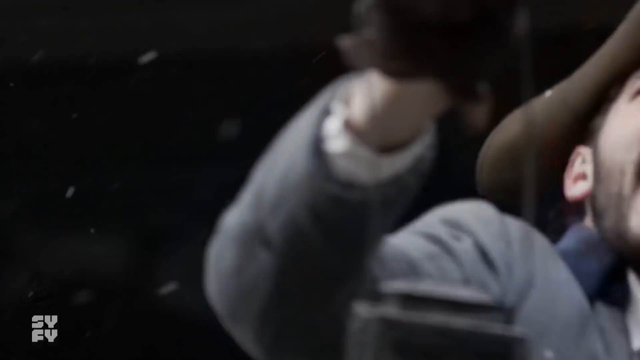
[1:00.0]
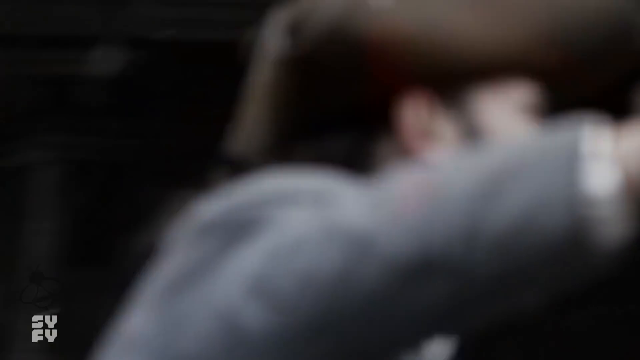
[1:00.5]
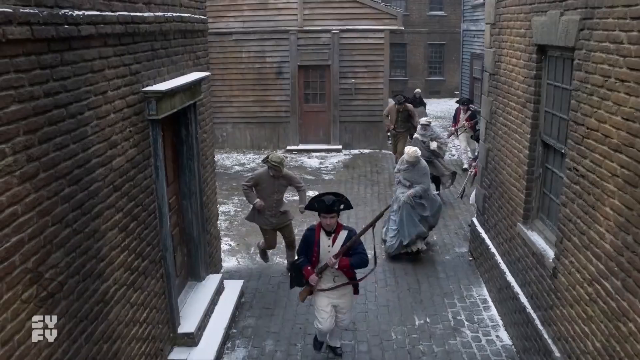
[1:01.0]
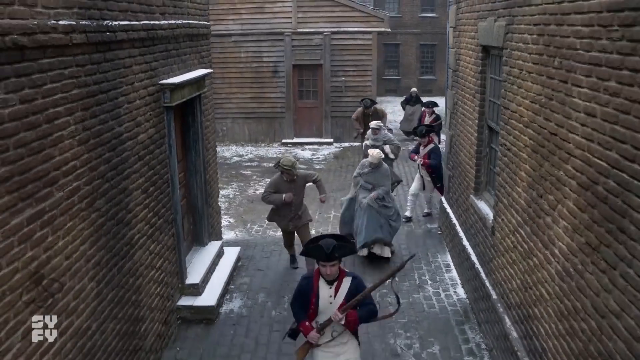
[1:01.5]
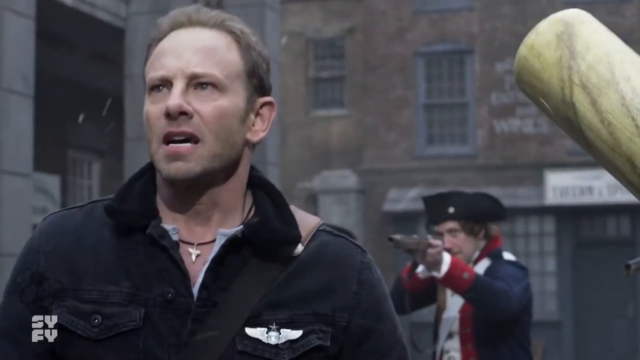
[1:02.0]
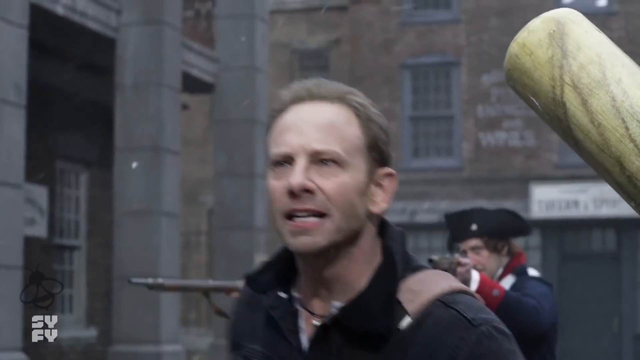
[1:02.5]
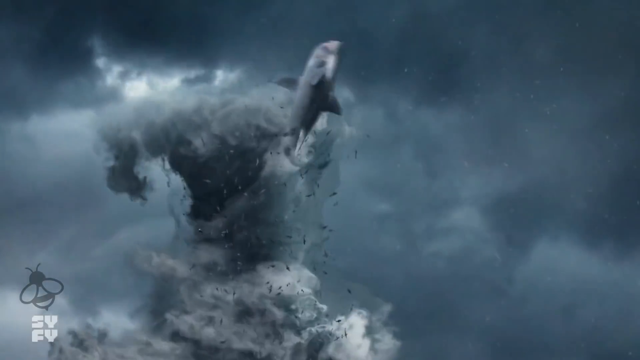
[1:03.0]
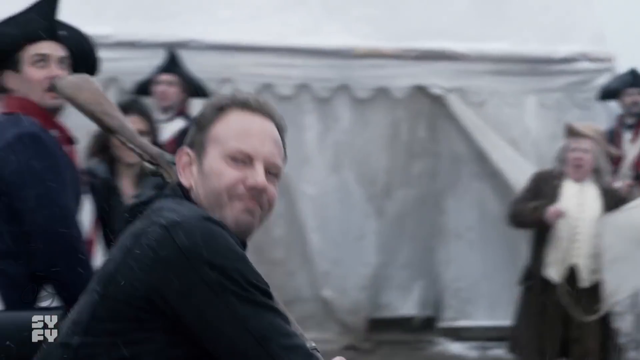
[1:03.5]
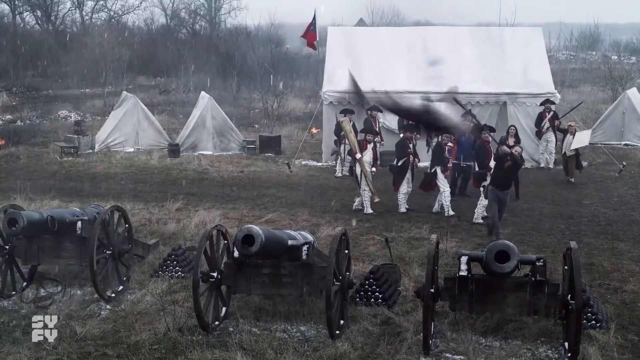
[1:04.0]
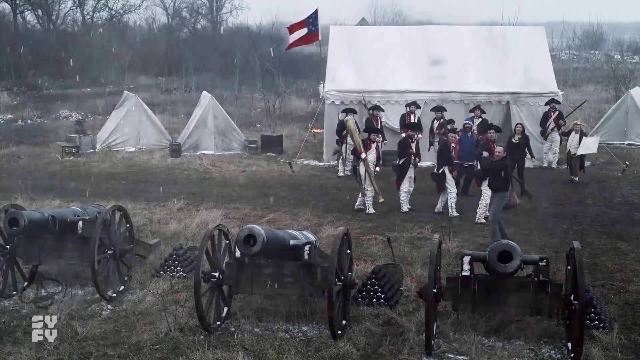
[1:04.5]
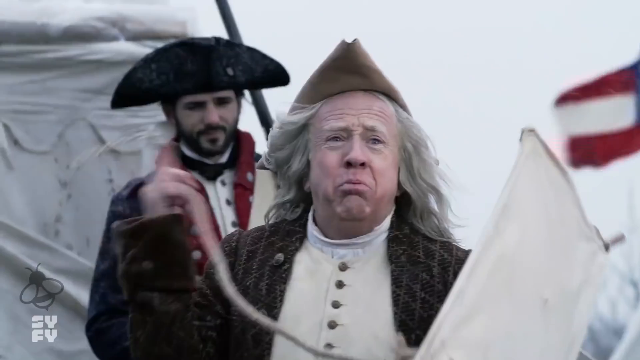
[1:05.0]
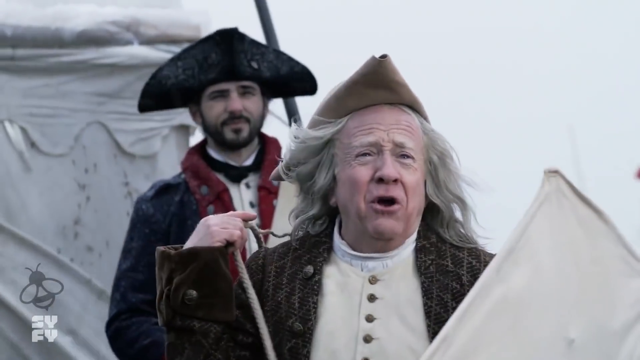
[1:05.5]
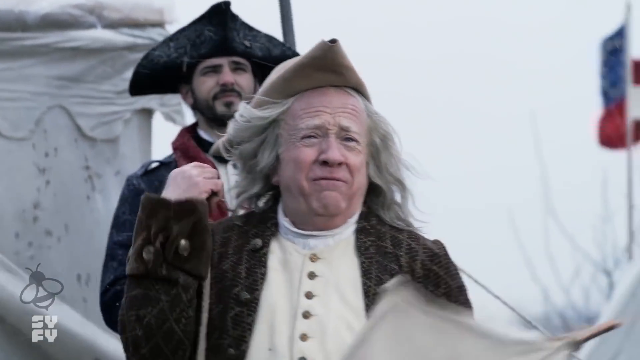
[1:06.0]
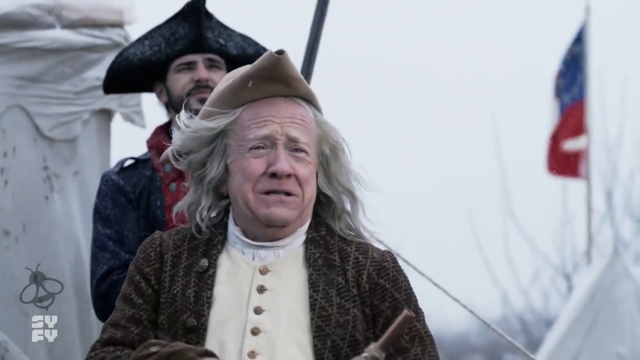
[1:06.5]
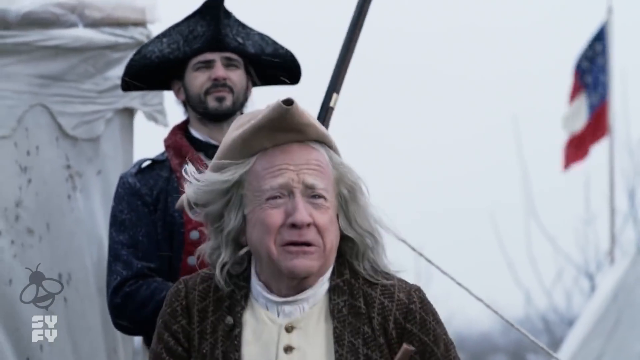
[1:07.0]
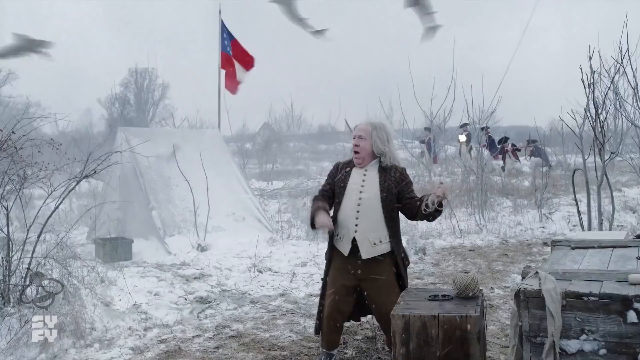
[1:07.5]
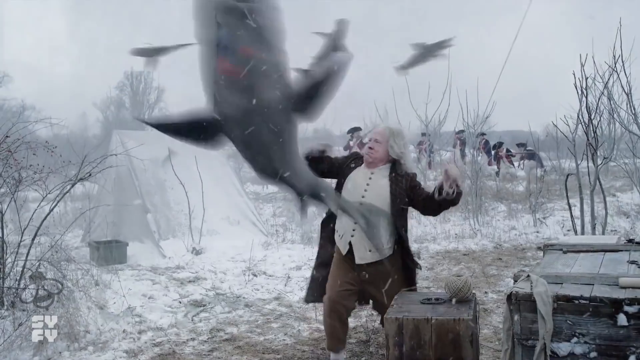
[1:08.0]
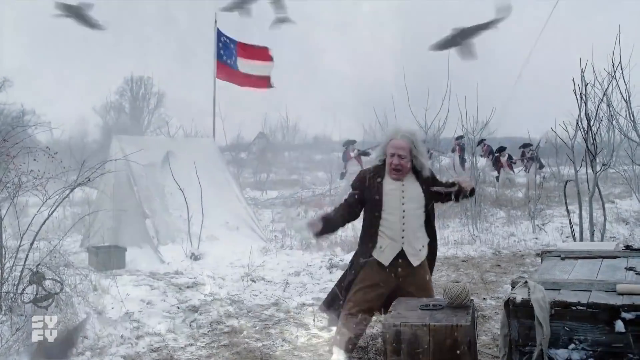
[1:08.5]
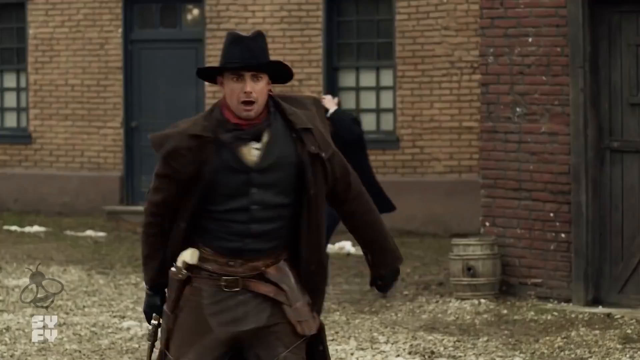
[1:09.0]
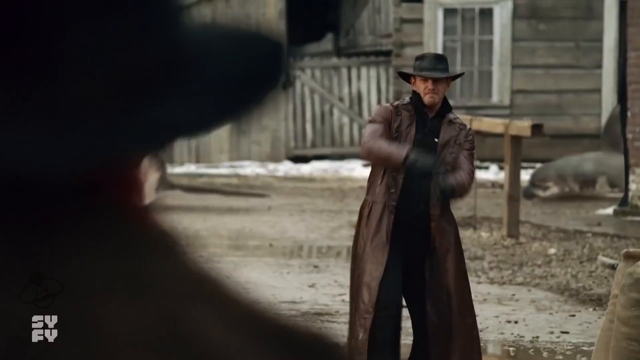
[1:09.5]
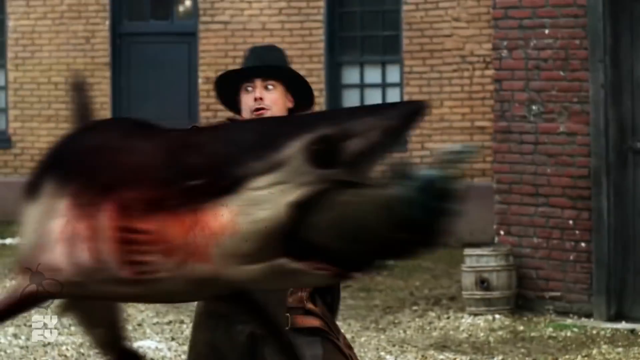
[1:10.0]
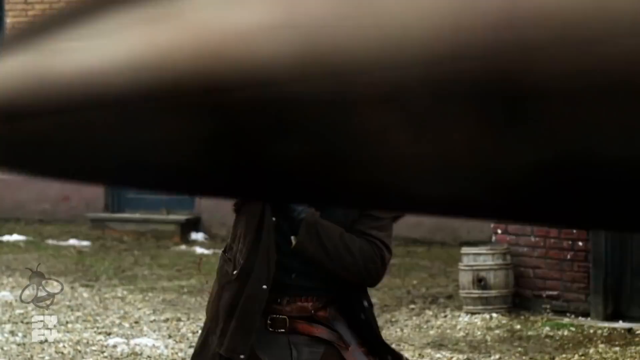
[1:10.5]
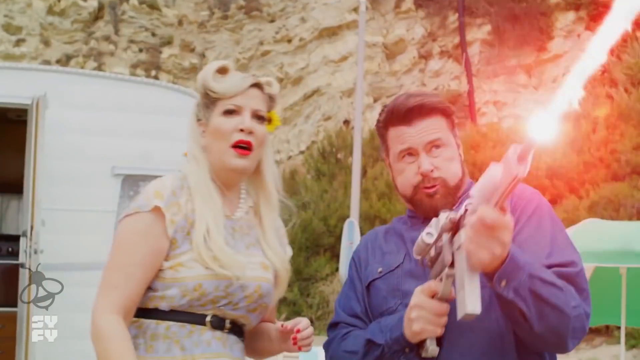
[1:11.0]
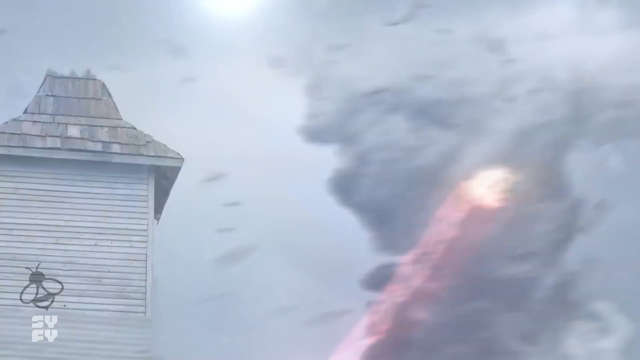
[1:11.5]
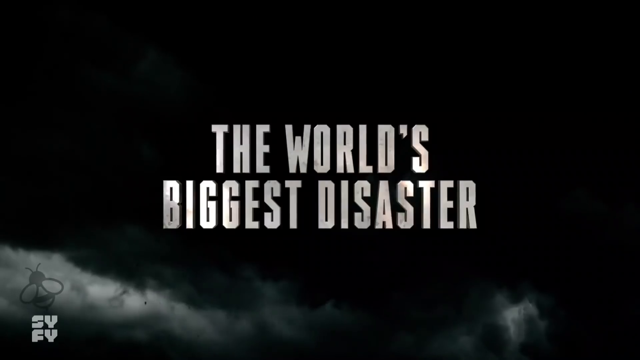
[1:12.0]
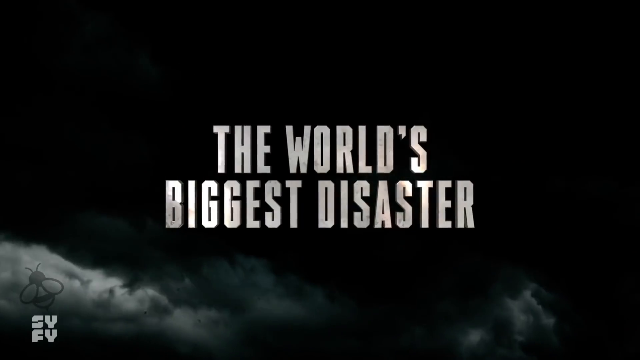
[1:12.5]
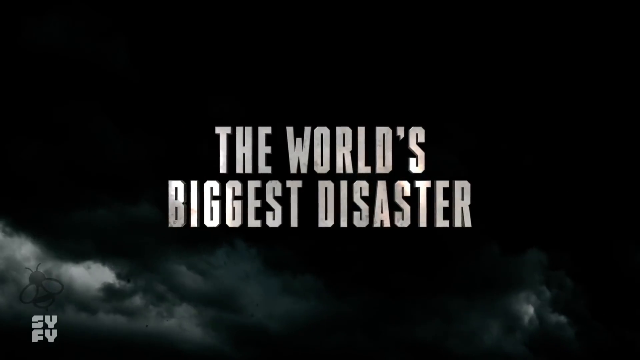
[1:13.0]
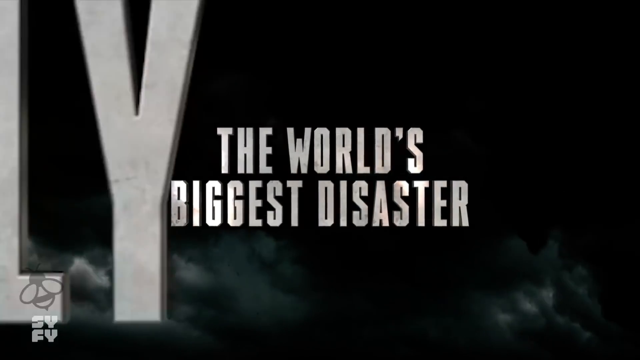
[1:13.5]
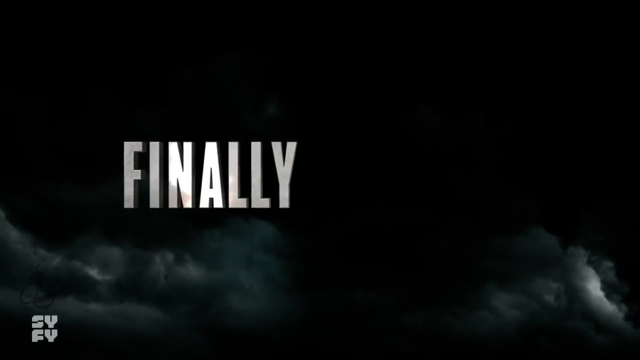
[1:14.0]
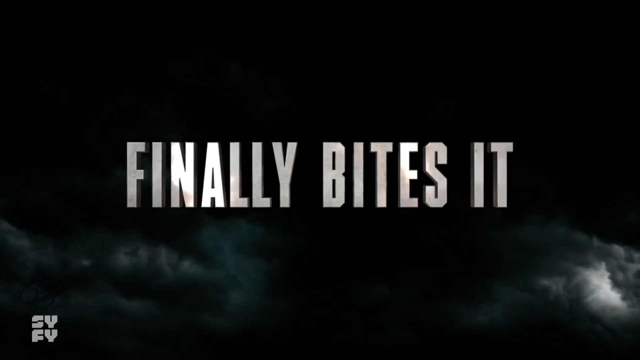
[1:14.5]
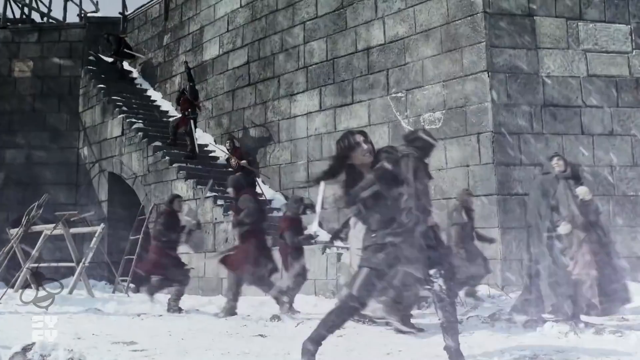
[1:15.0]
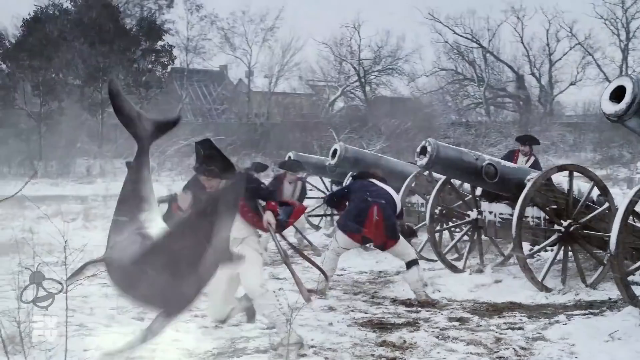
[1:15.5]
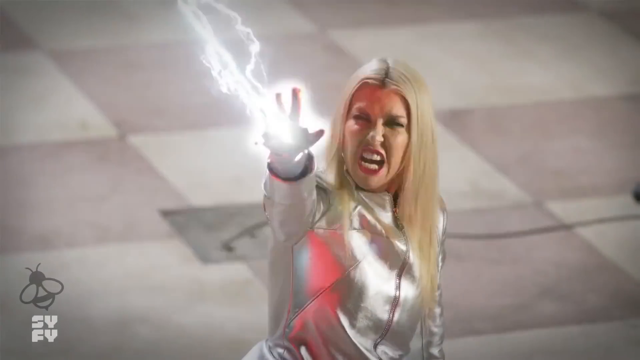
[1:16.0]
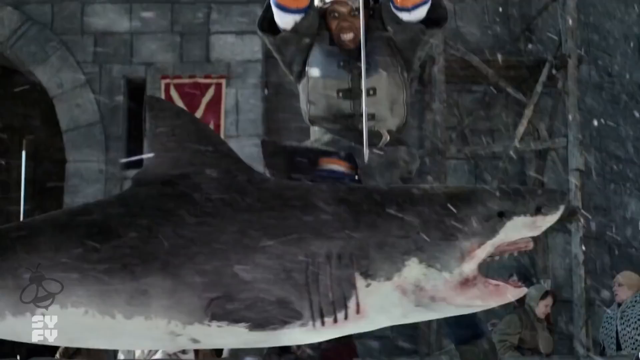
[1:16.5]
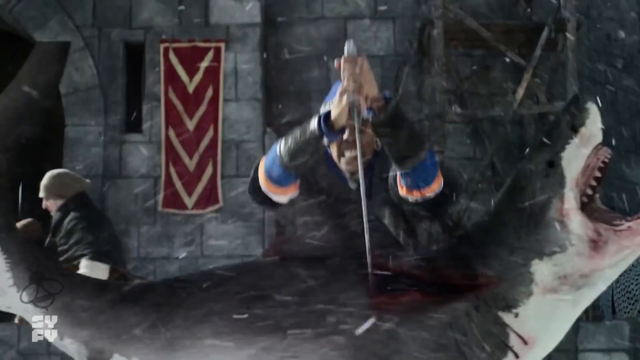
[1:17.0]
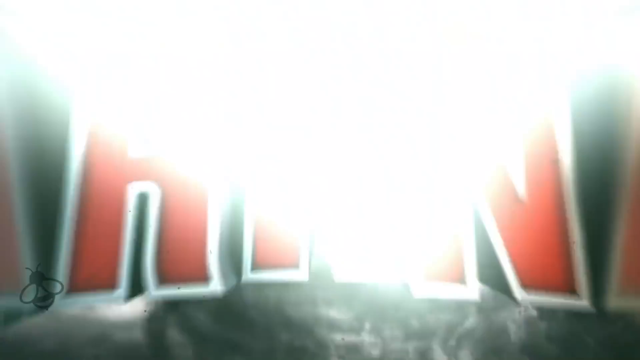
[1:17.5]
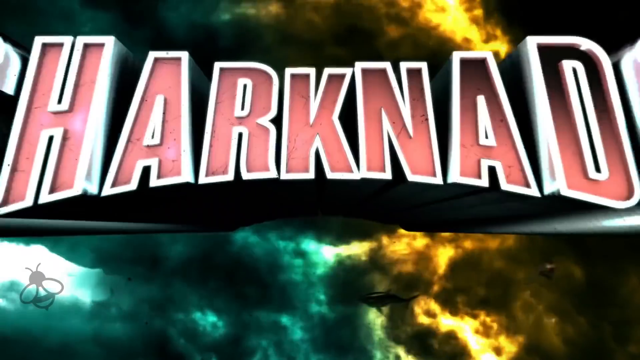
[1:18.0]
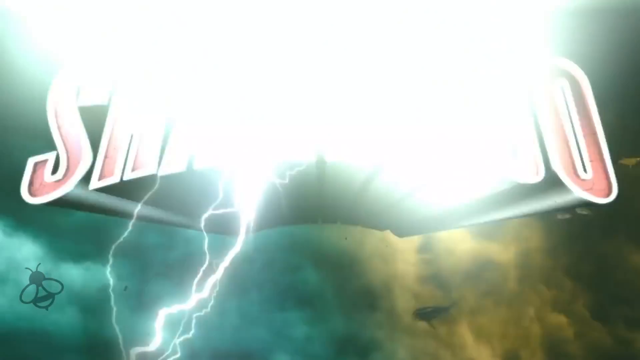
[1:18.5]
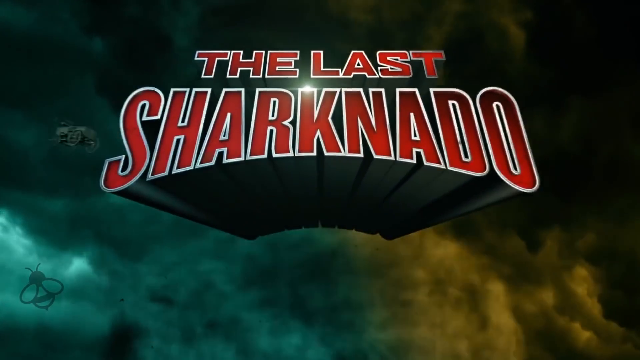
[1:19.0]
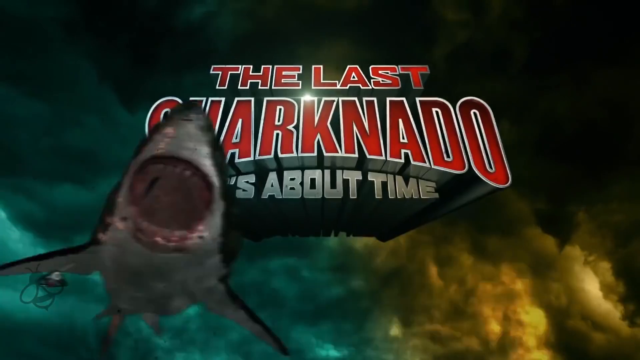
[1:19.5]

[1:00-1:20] A man in a cowboy hat appears, along with several different characters. A shark falls out of the sharknado, and a man hits it like a baseball. French soldiers like those from the time of Napoleon appear as sharks fall from the sky. One person punches a shark. During a small duel, a shark bites off the hand of a man about to take part. A man shoots red lasers from his gun. The dark cloud screen reads "the world's biggest disaster finally bites." More sharks follow, with people fighting, cannons, a woman shooting electricity from her hand, and people cutting the sharks. The title screen reads "the last Sharknado, it's about time" as a shark flies by in the tornado.